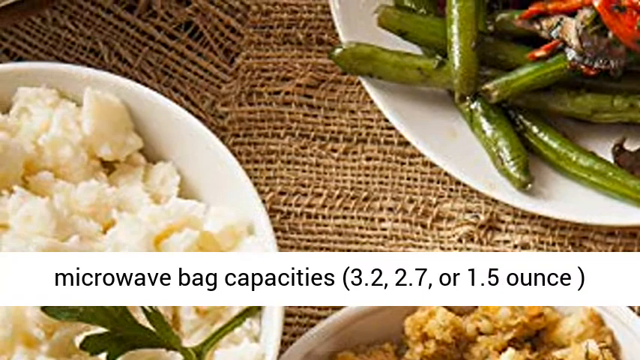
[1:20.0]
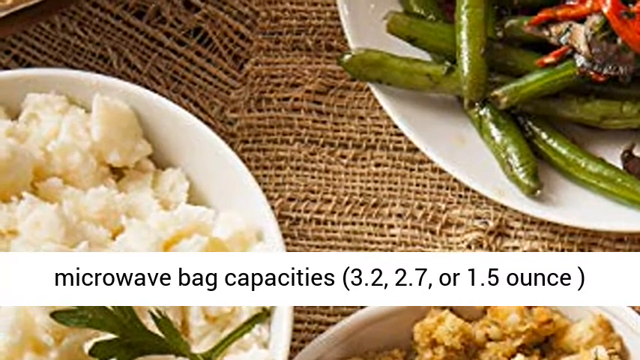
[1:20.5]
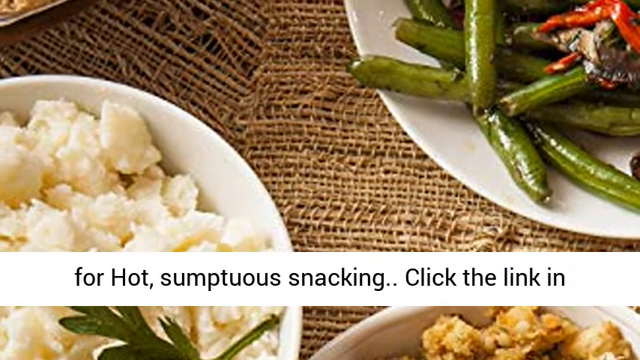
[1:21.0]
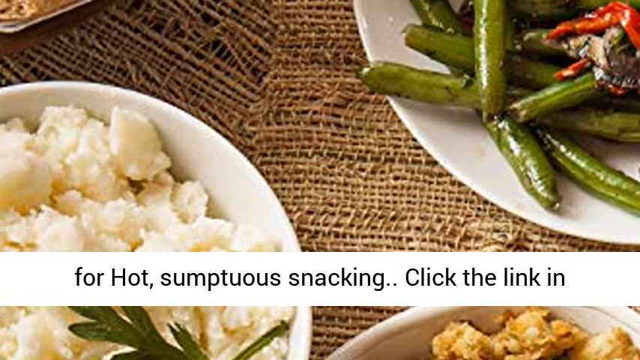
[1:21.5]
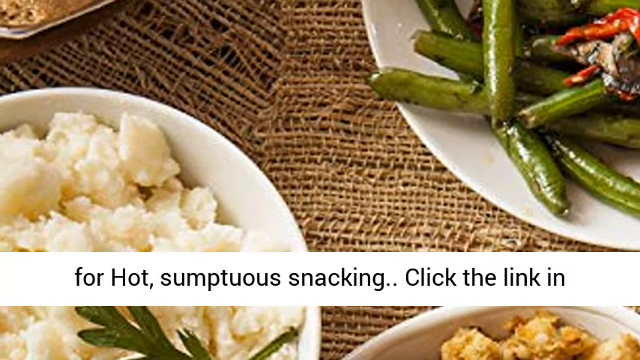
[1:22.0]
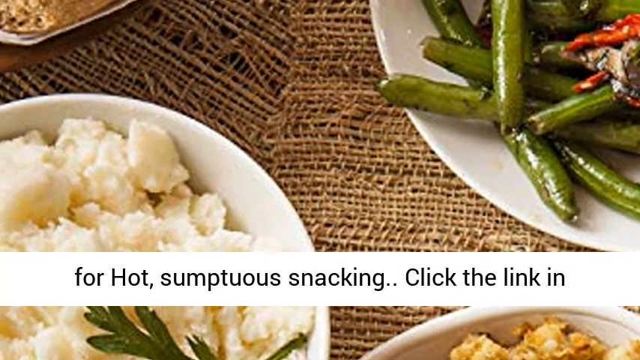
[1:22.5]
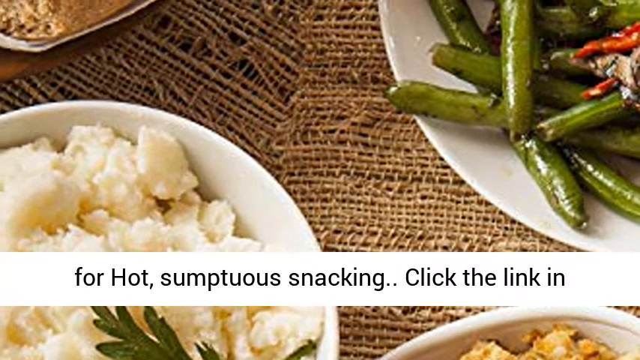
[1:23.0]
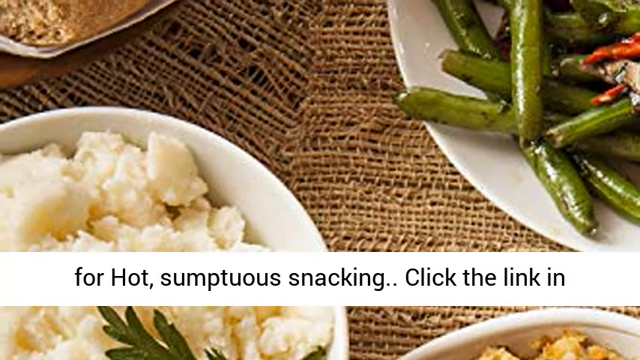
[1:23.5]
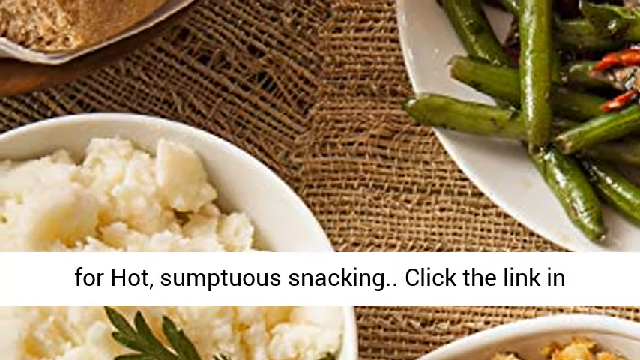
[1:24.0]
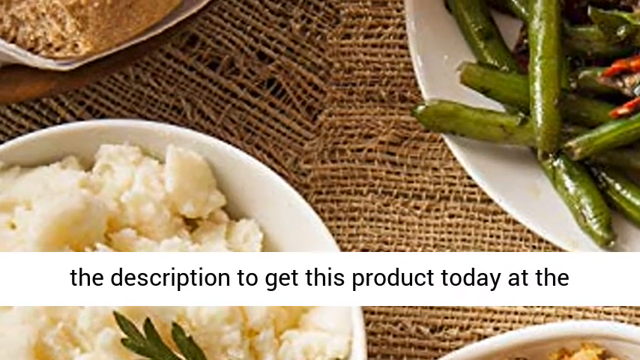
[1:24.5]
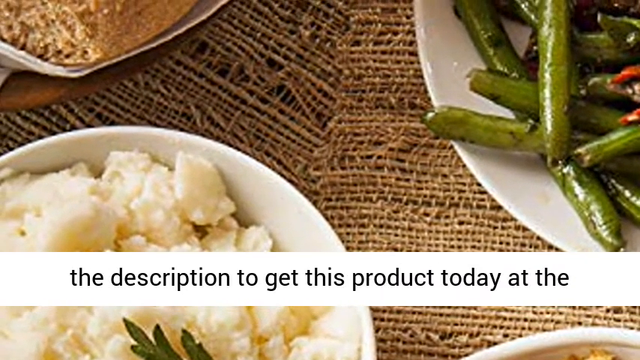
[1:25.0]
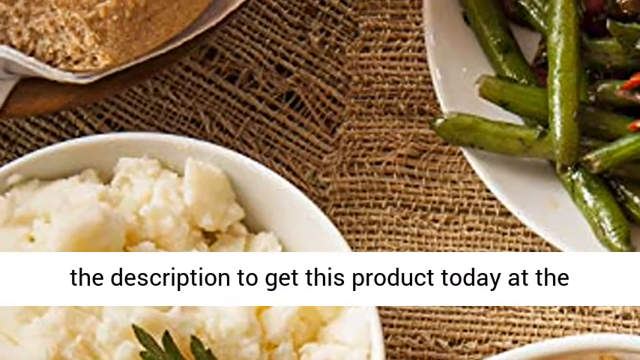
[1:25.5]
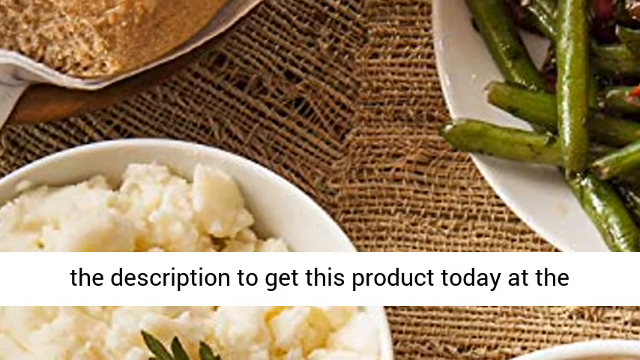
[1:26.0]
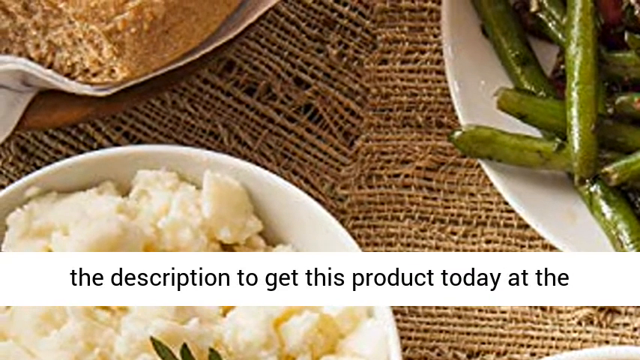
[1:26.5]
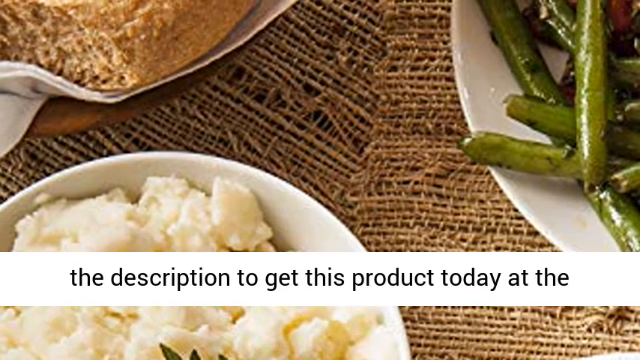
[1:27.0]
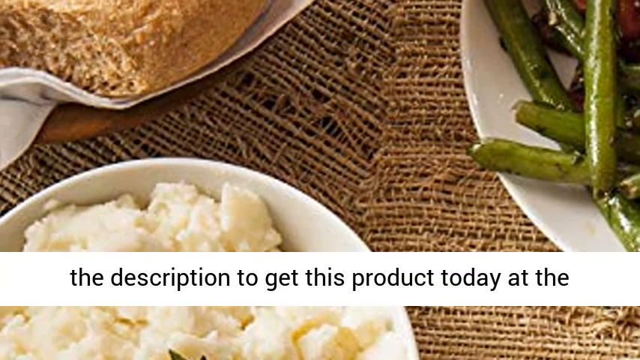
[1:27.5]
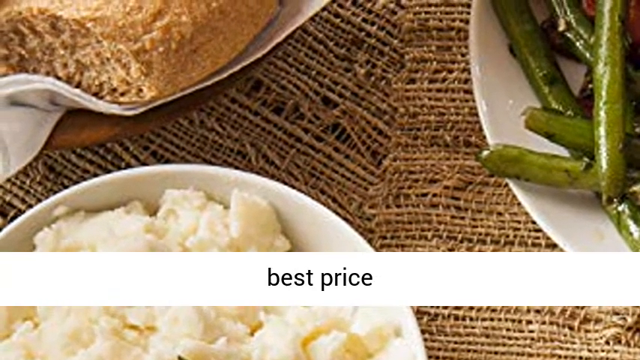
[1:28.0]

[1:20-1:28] Different plates of food are shown. The text at the bottom reads that microwave bag capacities are "3.2, 2.7, or 1.5 ounce for hot, sumptuous snacking." Then it reads "click the link in the description to get this product today at the best price." The video then ends.